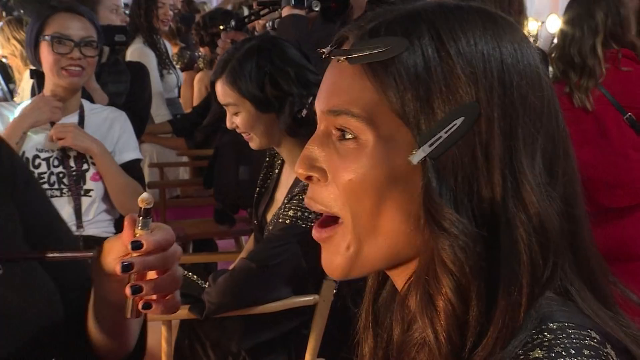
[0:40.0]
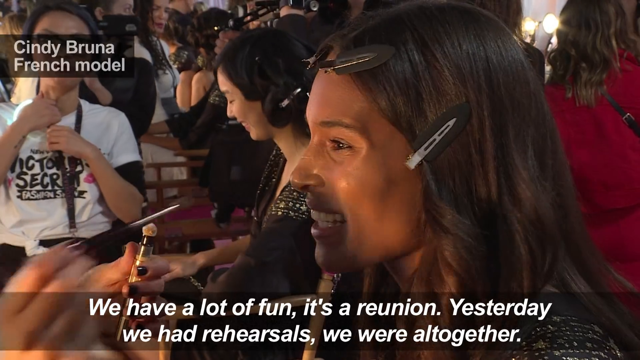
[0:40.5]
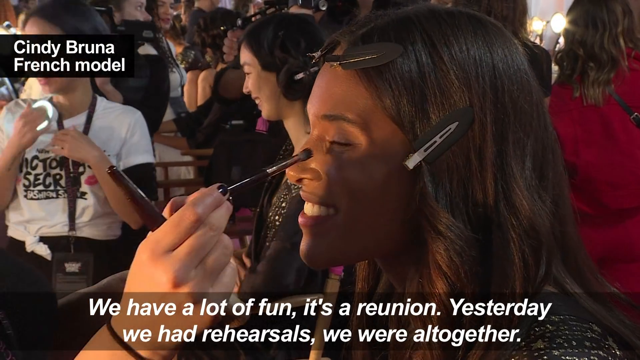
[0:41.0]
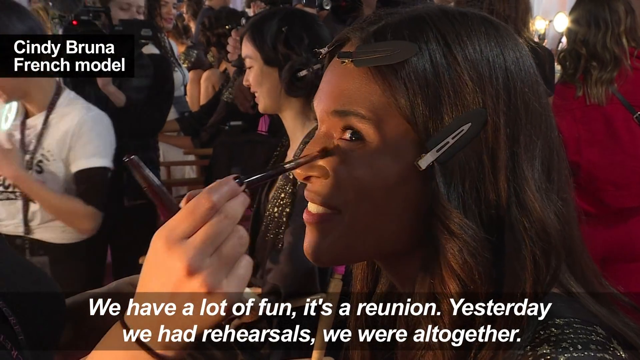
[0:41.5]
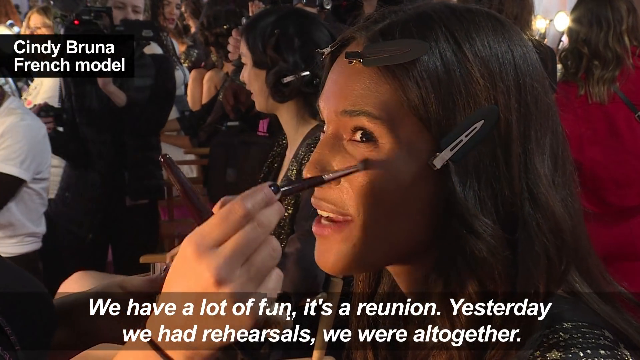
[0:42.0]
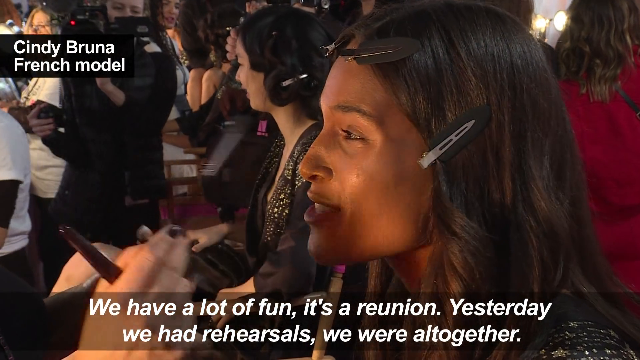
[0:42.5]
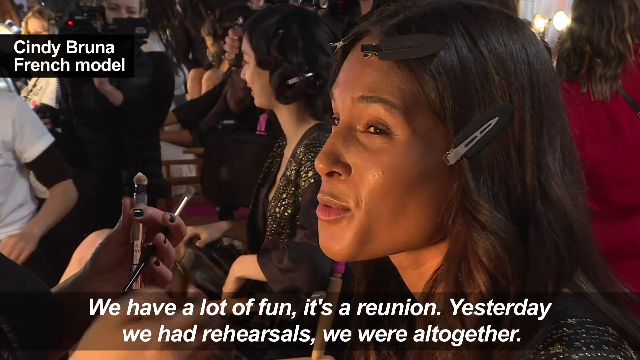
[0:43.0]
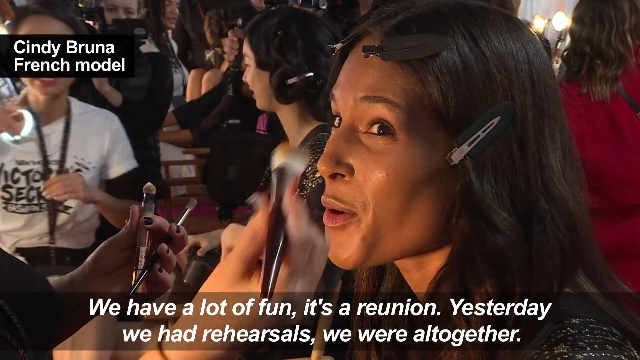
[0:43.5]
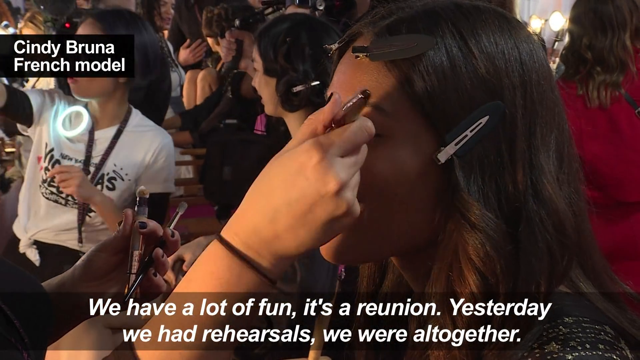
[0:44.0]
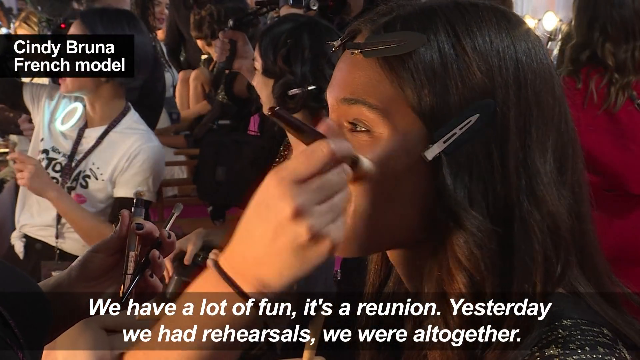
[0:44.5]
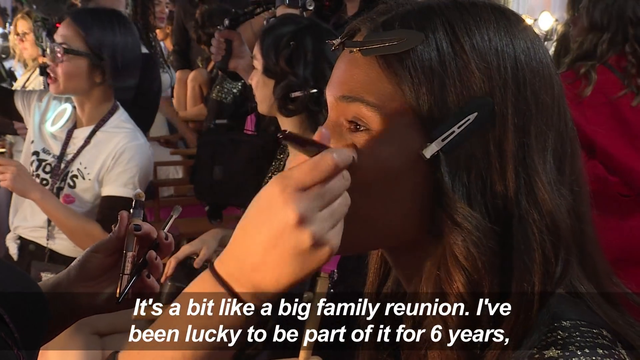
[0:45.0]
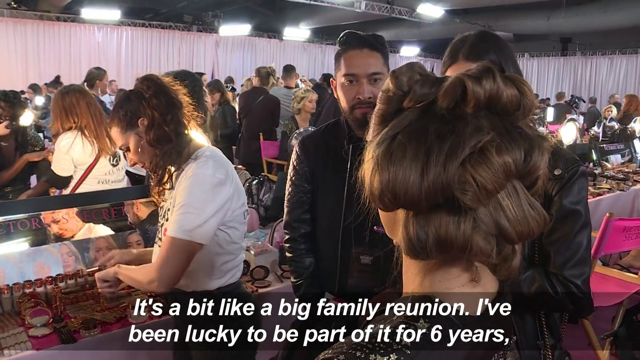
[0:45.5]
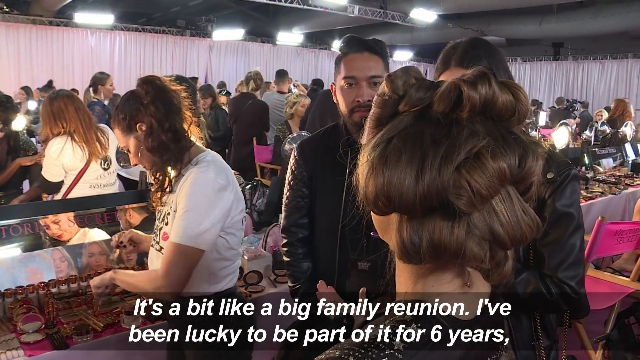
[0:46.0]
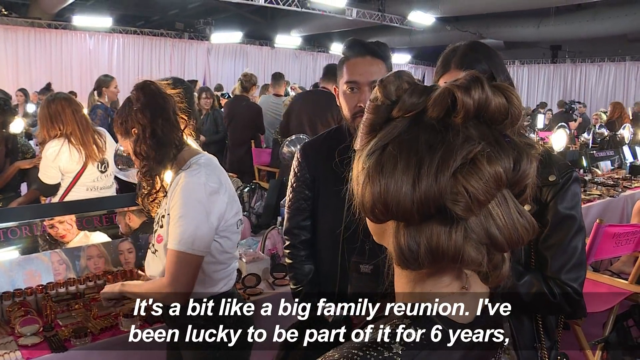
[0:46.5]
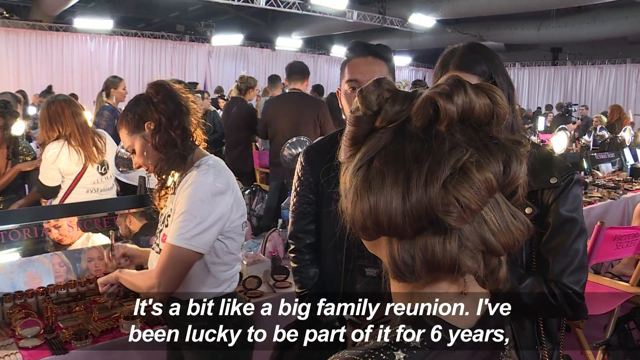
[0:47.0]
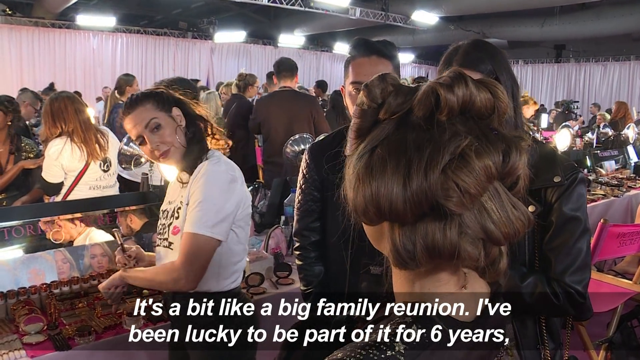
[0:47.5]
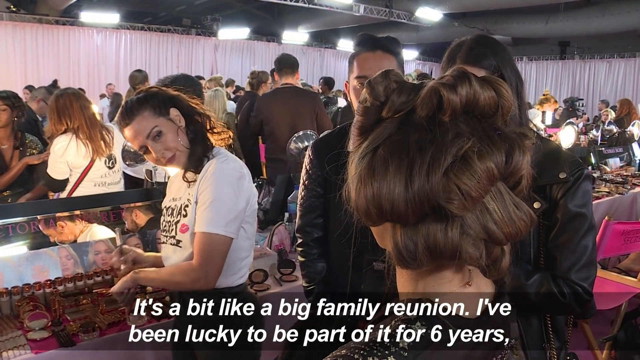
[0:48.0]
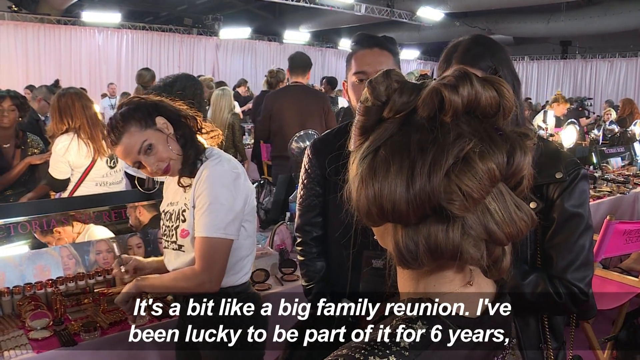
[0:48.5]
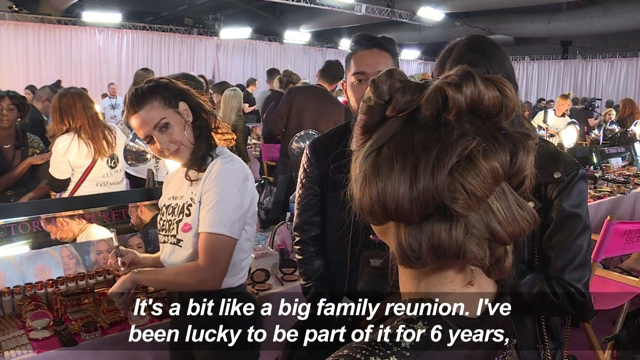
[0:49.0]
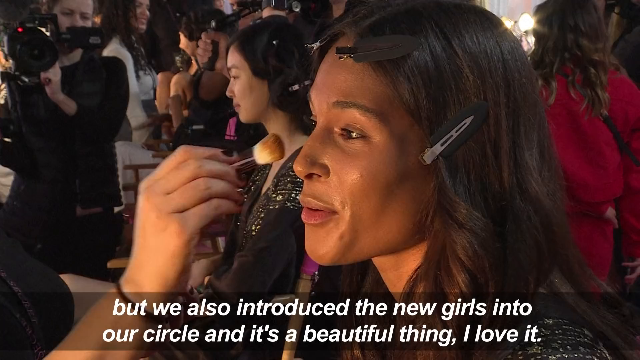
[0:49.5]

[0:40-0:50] A subtitle says "we have a lot of fun. At a reunion yesterday, we had rehearsals. We were all together." The model is Cindy Bruna, a French model, and the subtitles continue: "It's a bit like a big family reunion. I've been lucky to be part of it for six years." She talks to the press while her makeup artist is right in front of her, checking whether her face has been done properly. The makeup artist keeps looking at her face and brushing her hand with a makeup brush, maybe to test which colour would suit her face.